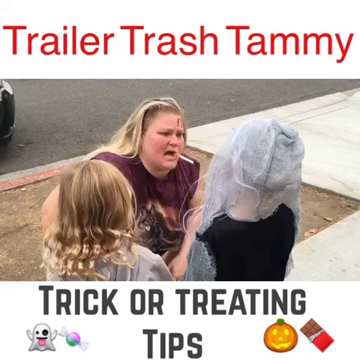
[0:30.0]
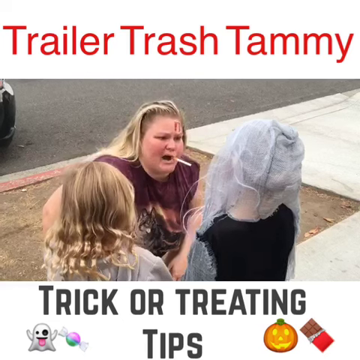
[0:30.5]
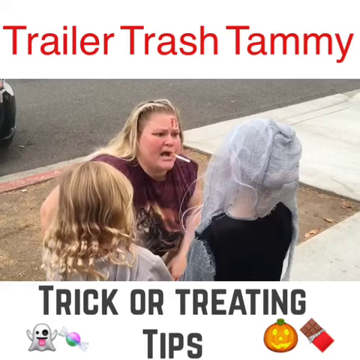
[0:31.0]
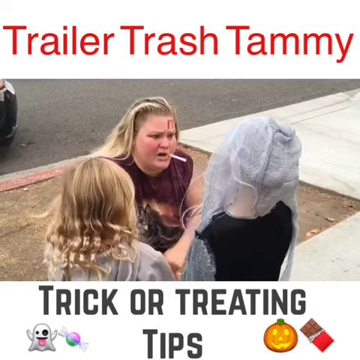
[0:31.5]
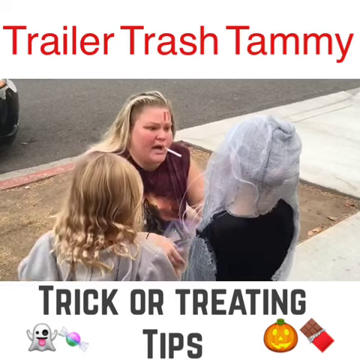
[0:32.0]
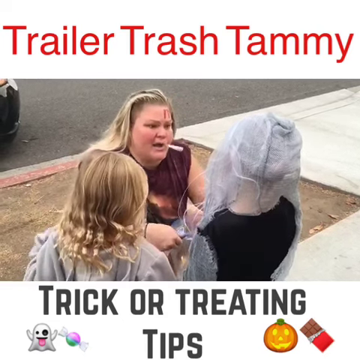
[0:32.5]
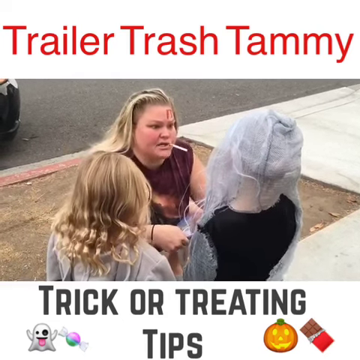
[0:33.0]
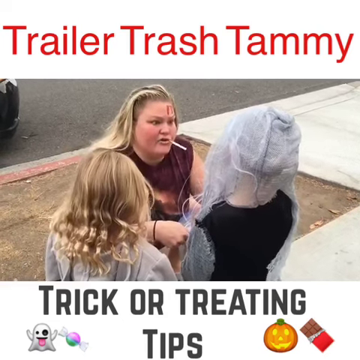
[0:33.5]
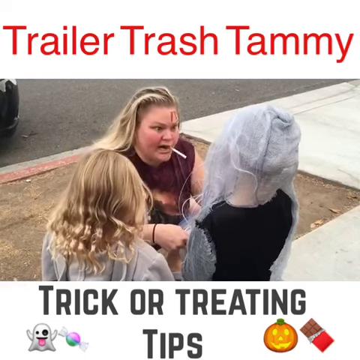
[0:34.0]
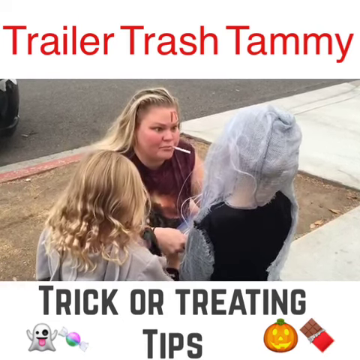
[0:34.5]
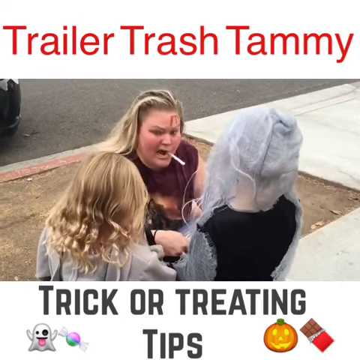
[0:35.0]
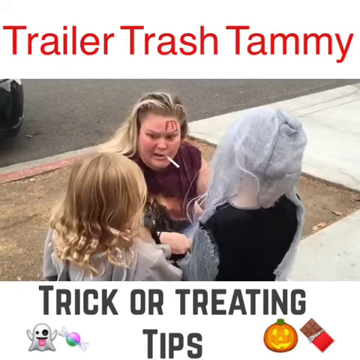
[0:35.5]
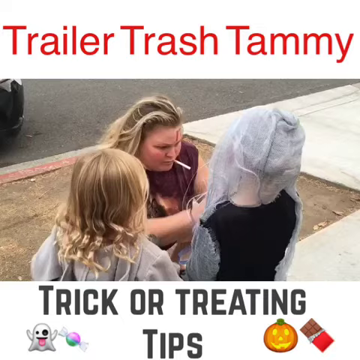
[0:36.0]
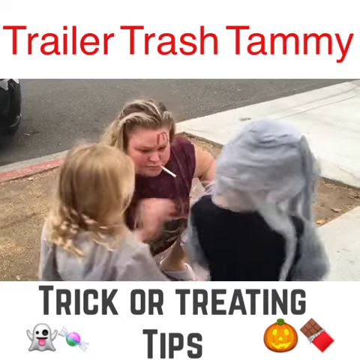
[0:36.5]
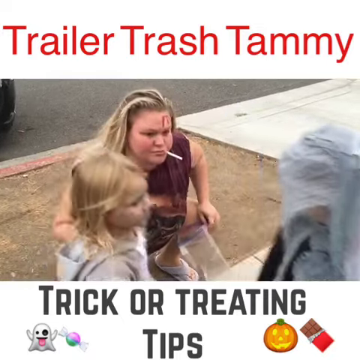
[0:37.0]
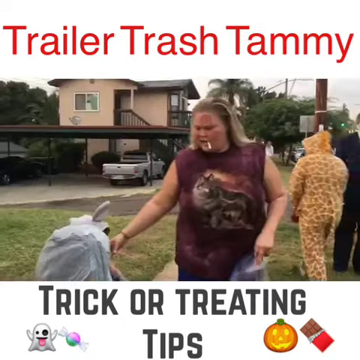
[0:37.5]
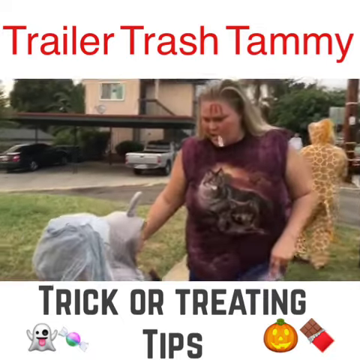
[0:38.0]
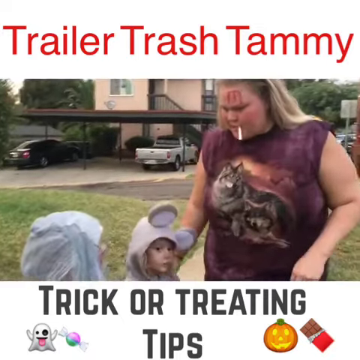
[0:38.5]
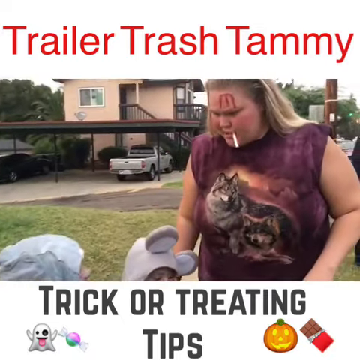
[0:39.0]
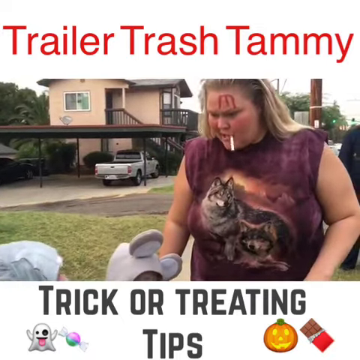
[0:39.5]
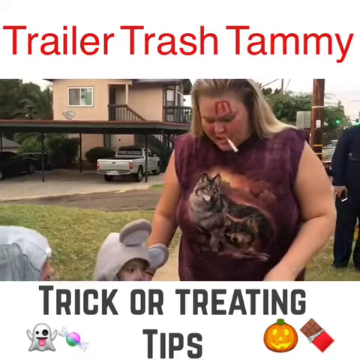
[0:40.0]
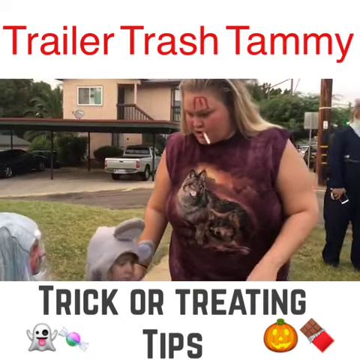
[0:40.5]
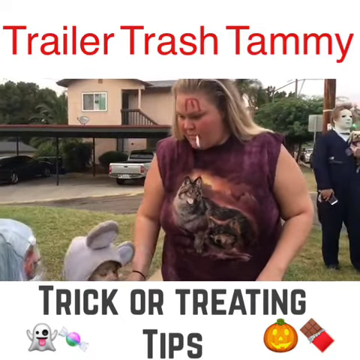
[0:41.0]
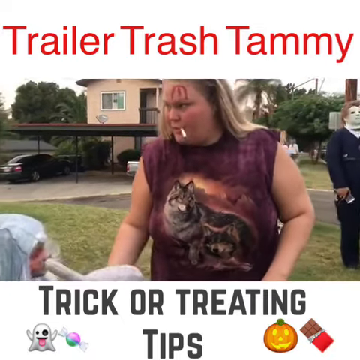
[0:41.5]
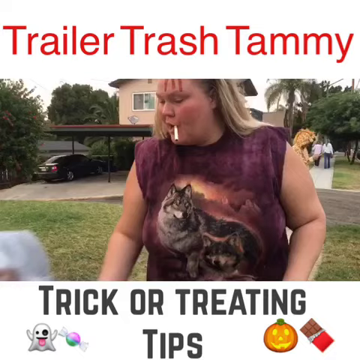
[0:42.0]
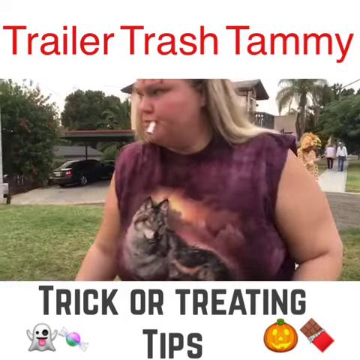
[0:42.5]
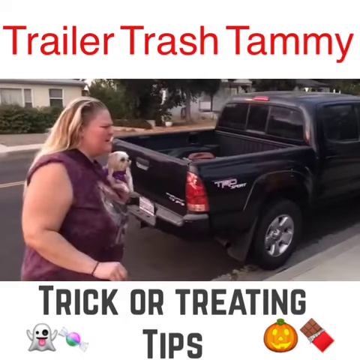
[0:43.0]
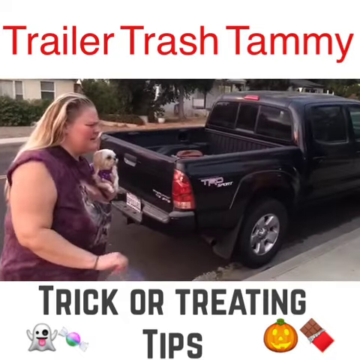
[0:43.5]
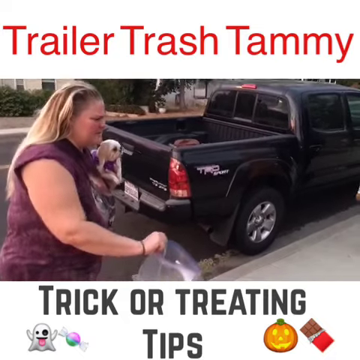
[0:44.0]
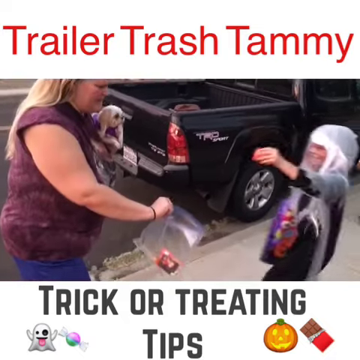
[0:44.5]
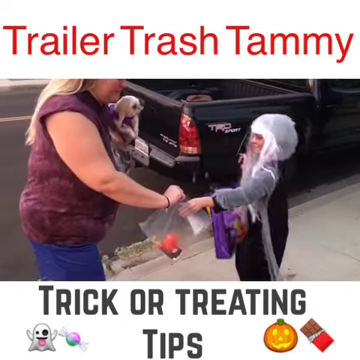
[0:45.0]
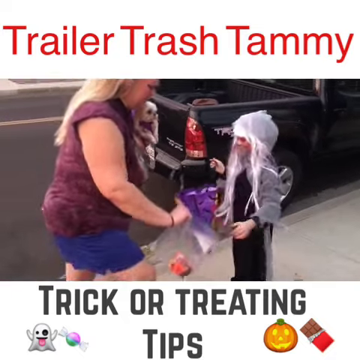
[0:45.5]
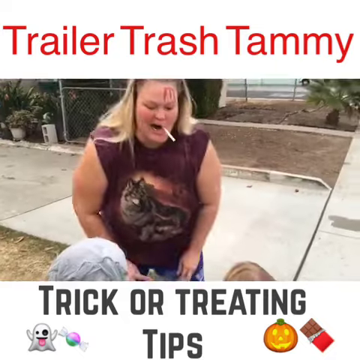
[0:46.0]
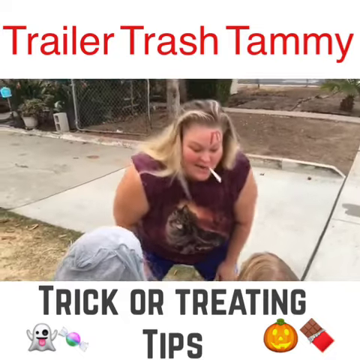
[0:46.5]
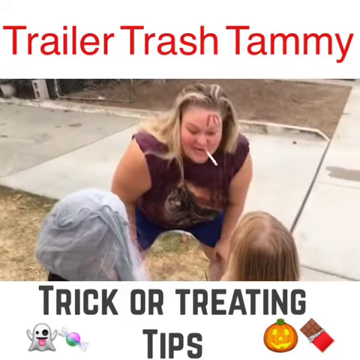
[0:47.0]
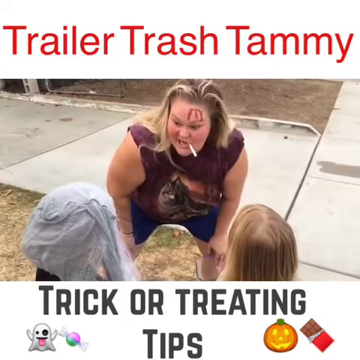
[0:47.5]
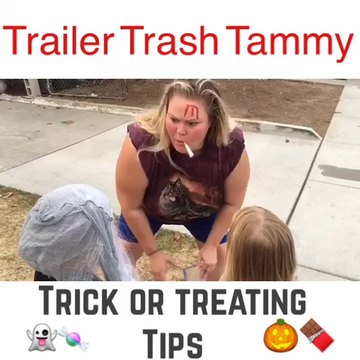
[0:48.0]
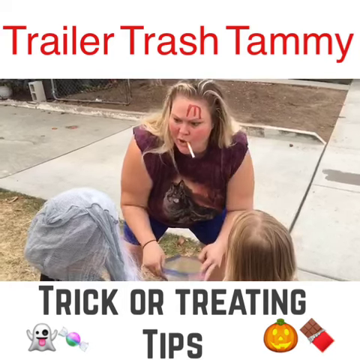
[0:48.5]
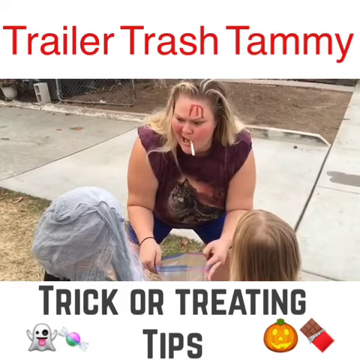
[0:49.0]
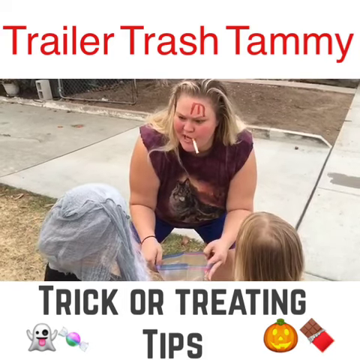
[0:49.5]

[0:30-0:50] Trailer Trash Tammy stands outside on the sidewalk. Behind them is a large area with no grass growing, apparently either where grass has not grown or because it is wintertime. Tammy has blonde hair and appears to have a red tattoo toward the left side of her forehead. She stands with a scowl on her face and the unlit cigarette hanging out of her mouth. She wears a burgundy muscle shirt with some sort of design on the front and talks to two ladies, one who looks like she has gray hair and the other who looks like she has blonde hair that is curly on the ends. Tammy looks very upset as she speaks to them. Toward the bottom of the frame are the words "trick or treating tips". Tammy holds up her bag, perhaps her Halloween bag for trick-or-treating. Some children dressed in costumes walk with her, and the trick-or-treating bags they hold look like gallon-size Ziploc bags. Next, Tammy walks on the sidewalk again, this time appearing to hold a small puppy that appears light beige with black eyes and a black button nose. She stands next to a black pickup truck.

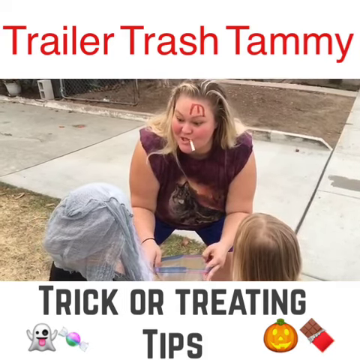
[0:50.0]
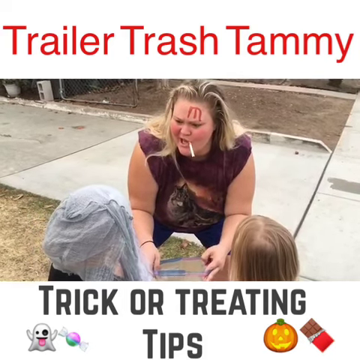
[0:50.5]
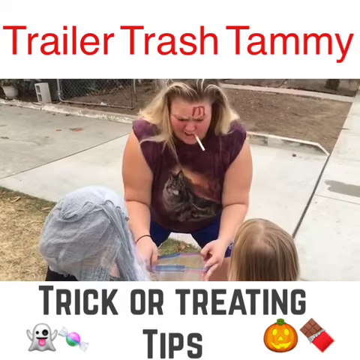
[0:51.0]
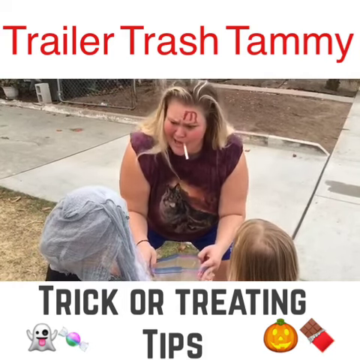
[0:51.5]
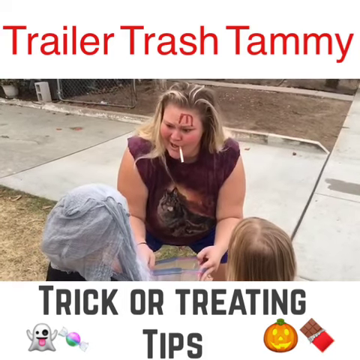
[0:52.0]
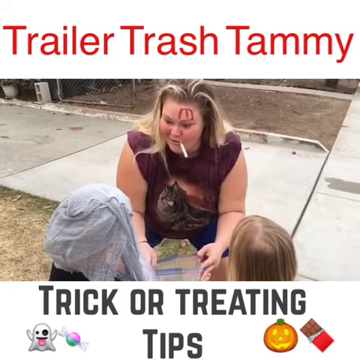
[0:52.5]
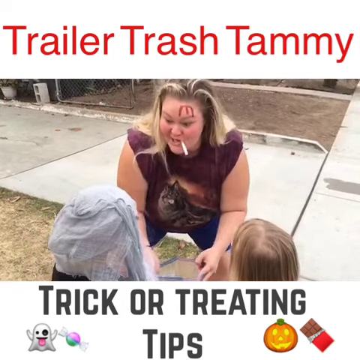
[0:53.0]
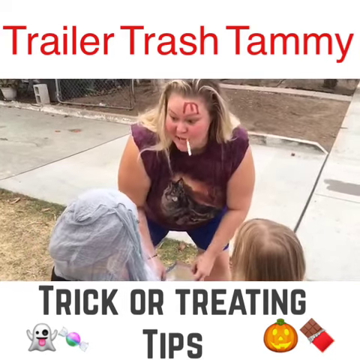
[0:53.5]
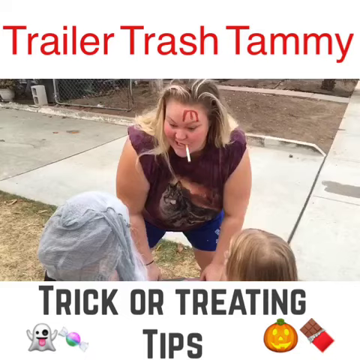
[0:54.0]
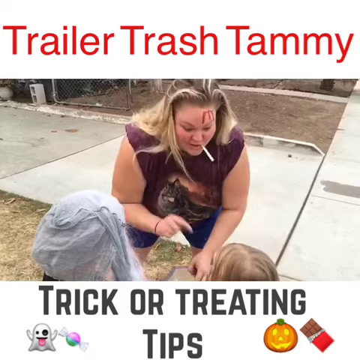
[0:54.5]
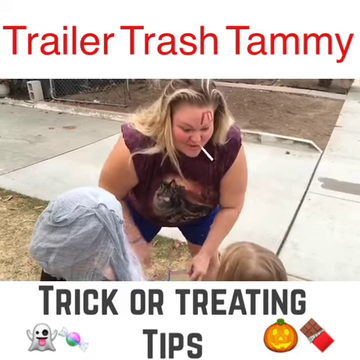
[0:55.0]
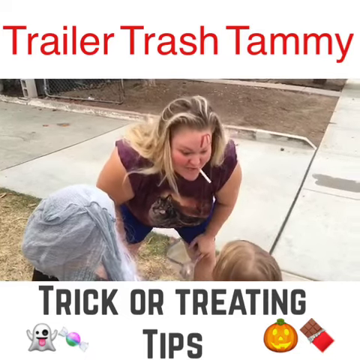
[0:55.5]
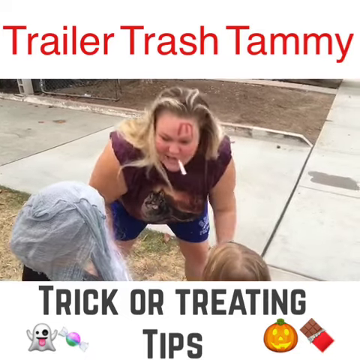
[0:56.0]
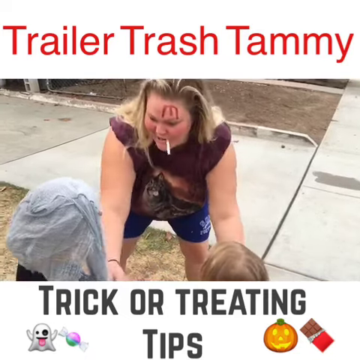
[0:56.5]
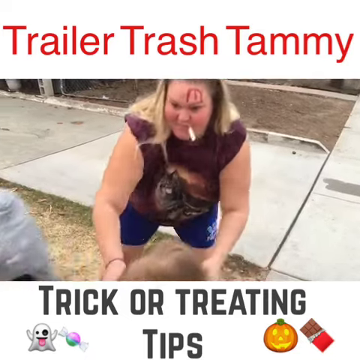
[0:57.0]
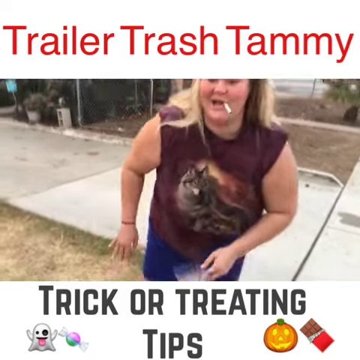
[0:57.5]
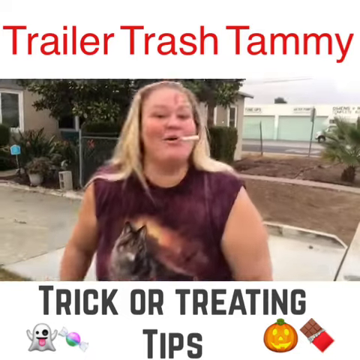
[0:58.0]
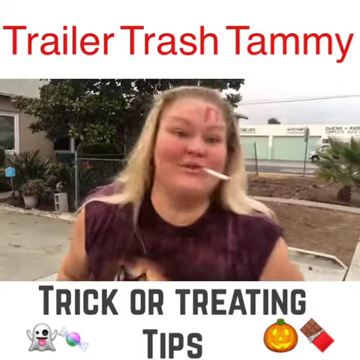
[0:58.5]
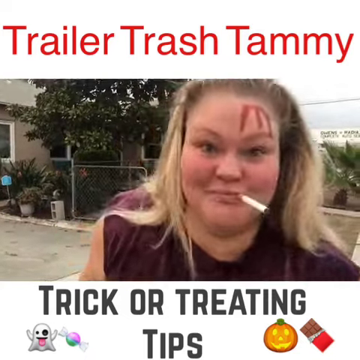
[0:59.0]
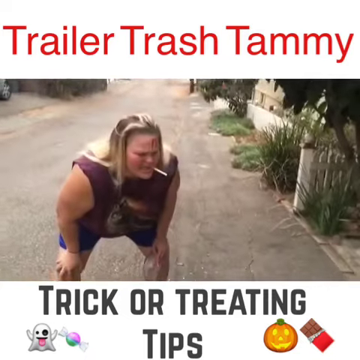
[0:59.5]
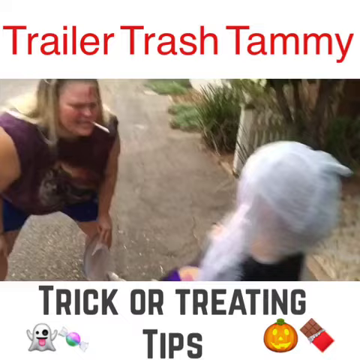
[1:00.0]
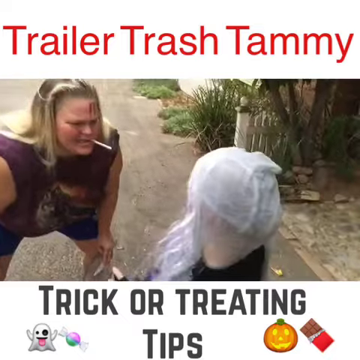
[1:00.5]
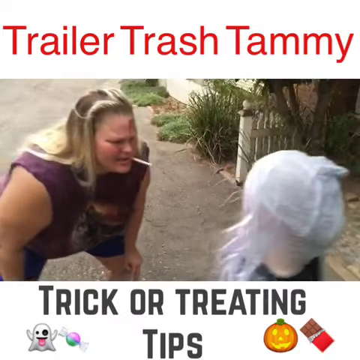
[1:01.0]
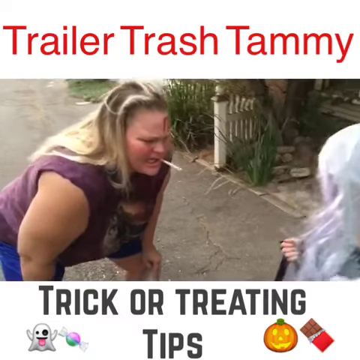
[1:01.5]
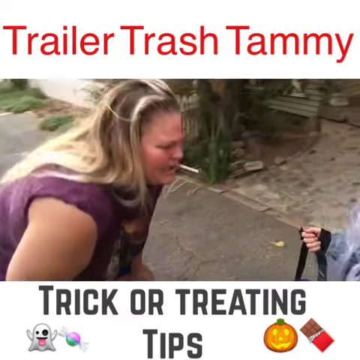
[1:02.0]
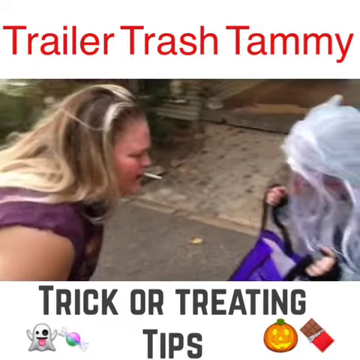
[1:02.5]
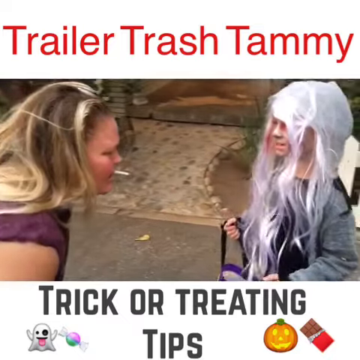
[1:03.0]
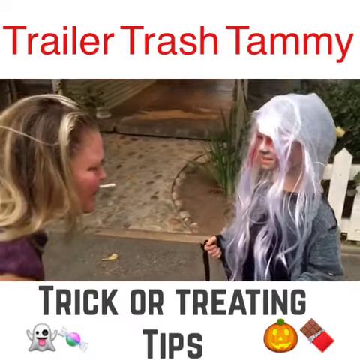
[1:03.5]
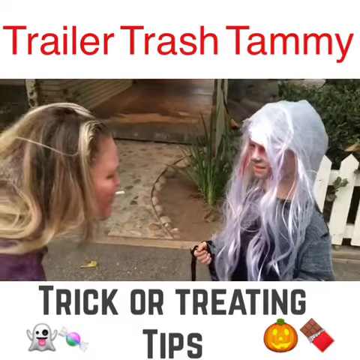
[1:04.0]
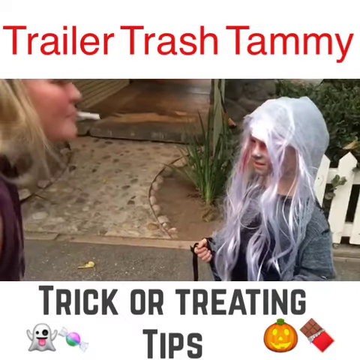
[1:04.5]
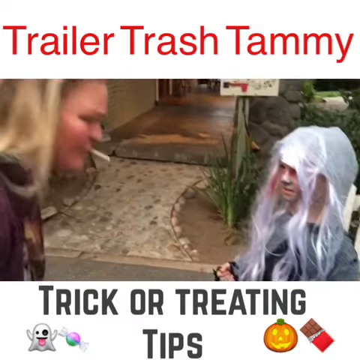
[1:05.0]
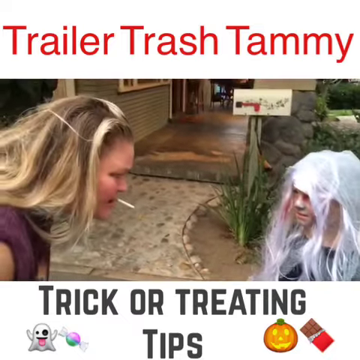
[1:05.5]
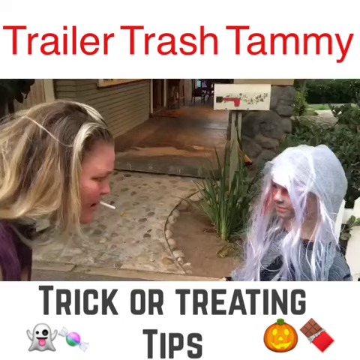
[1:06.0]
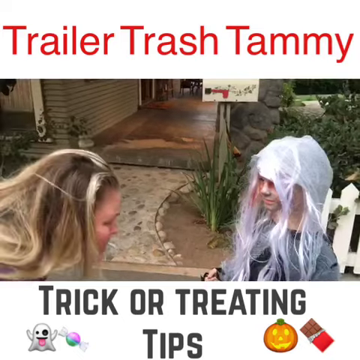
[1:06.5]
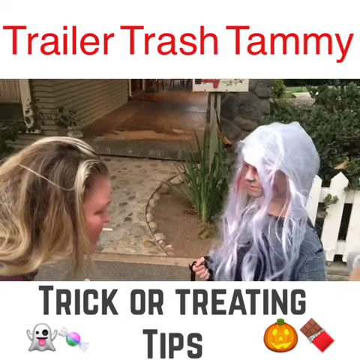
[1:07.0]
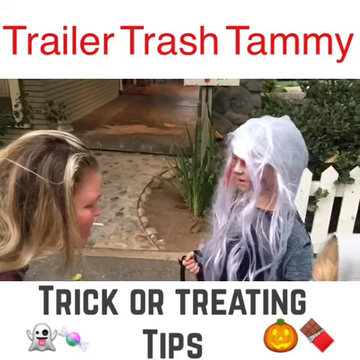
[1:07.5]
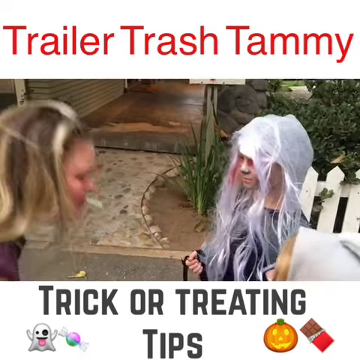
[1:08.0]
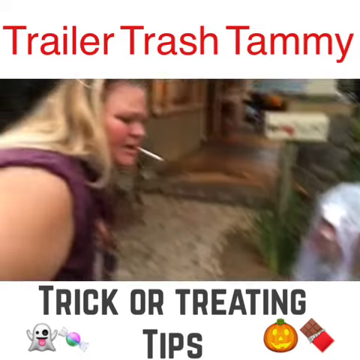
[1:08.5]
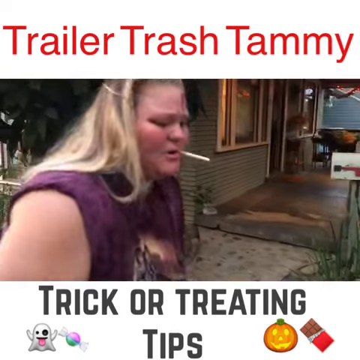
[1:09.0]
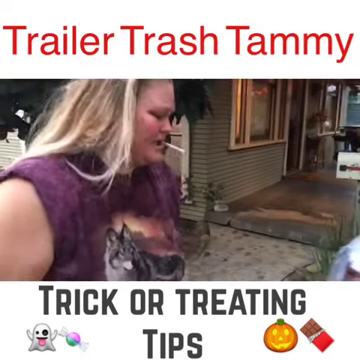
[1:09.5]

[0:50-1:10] Trailer Trash Tammy bends over toward the children, looking like she is trying to explain something to them, without taking the cigarette out of her mouth. She holds the gallon-sized Ziploc bag in her hands. The red tattoo on her forehead is more visible; it looks like a poorly written letter M in red. Tammy looks inebriated as she talks to the children. She wears denim knee-length shorts. She appears to be telling them how to go up to the houses and trick-or-treat. As the children walk away happily, she yells out something to them. In the background there are tropical plants and a palm tree.